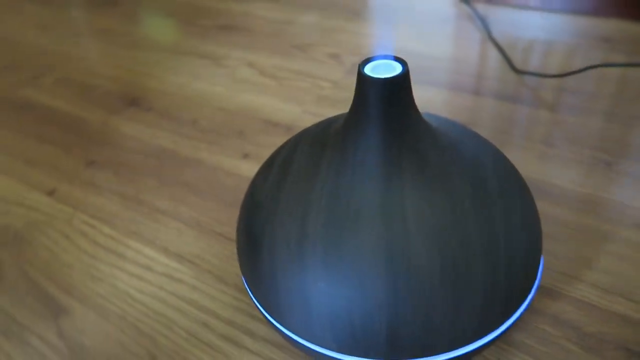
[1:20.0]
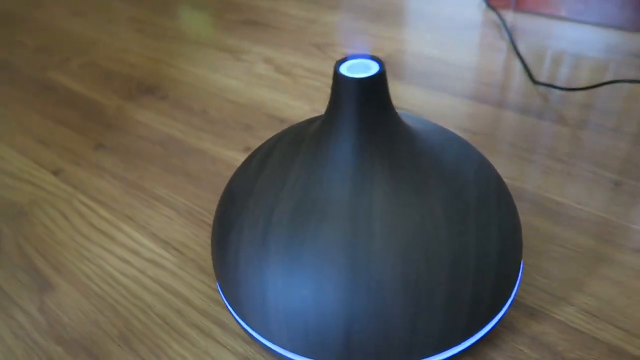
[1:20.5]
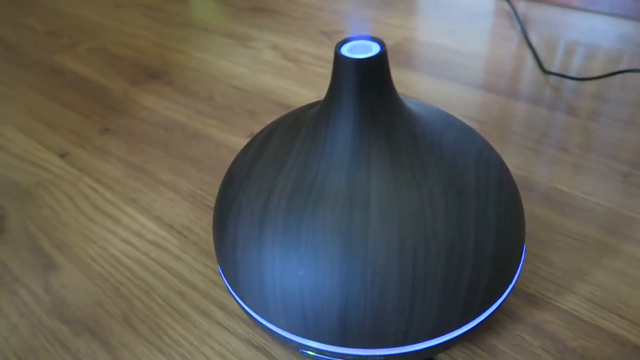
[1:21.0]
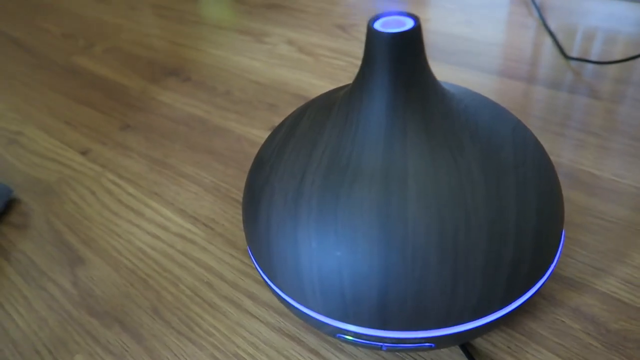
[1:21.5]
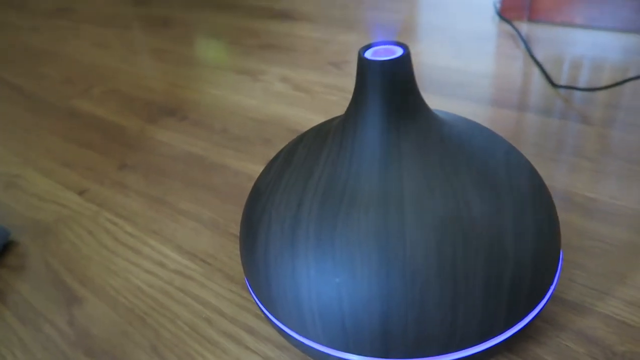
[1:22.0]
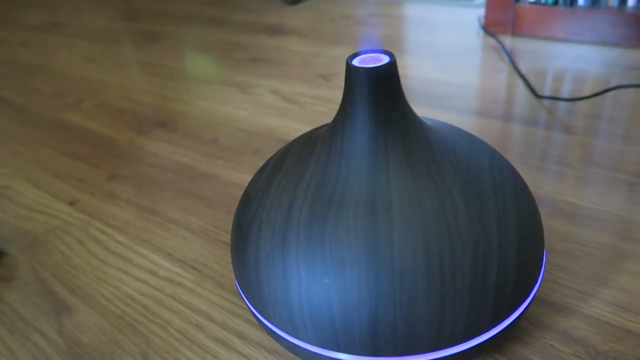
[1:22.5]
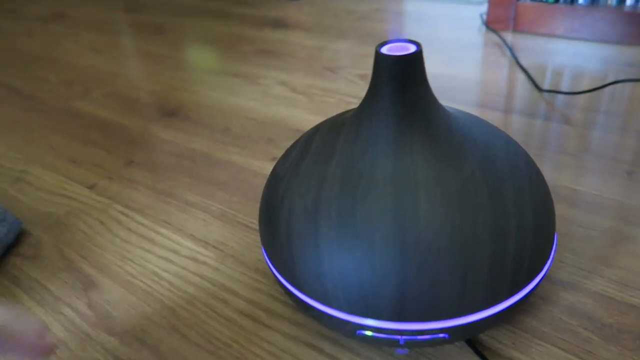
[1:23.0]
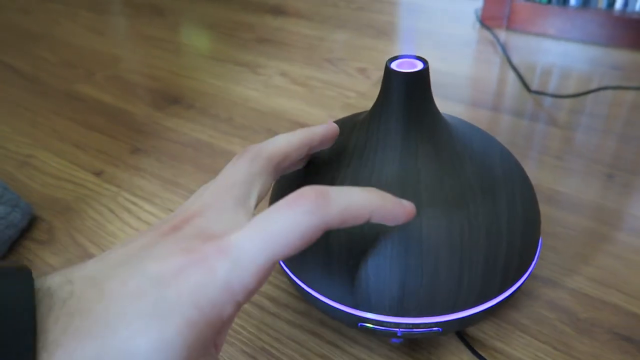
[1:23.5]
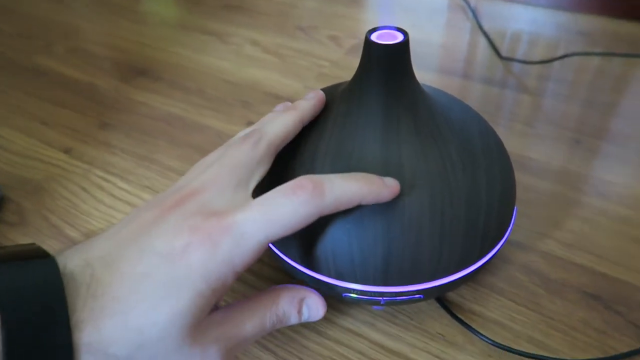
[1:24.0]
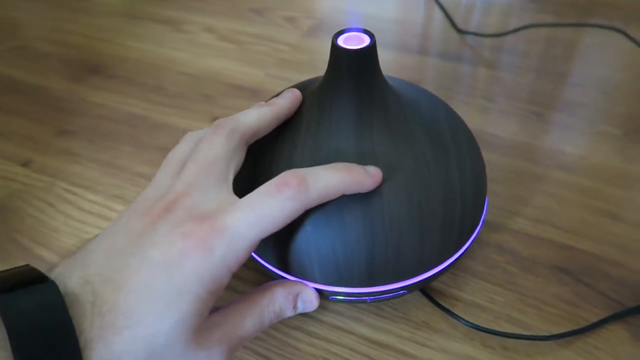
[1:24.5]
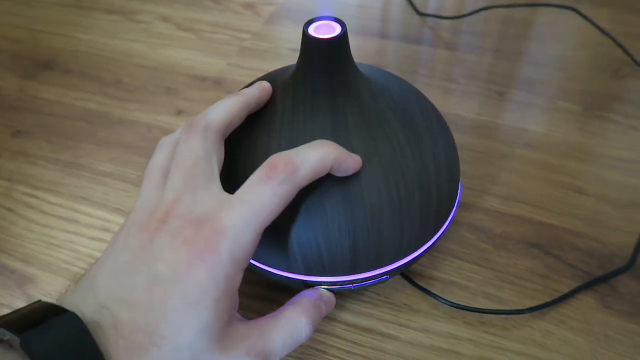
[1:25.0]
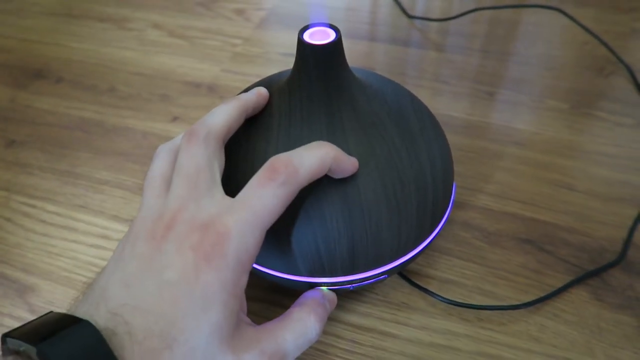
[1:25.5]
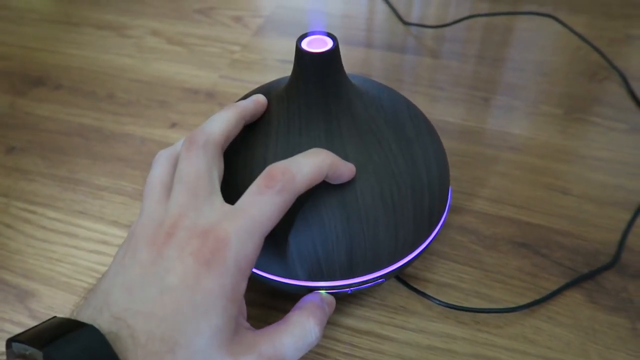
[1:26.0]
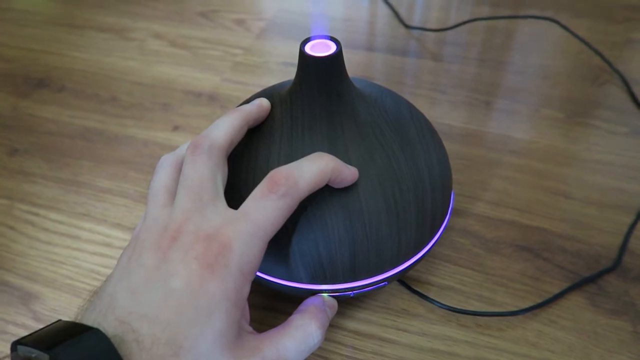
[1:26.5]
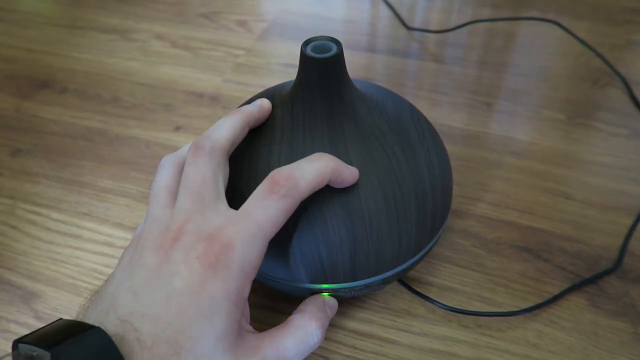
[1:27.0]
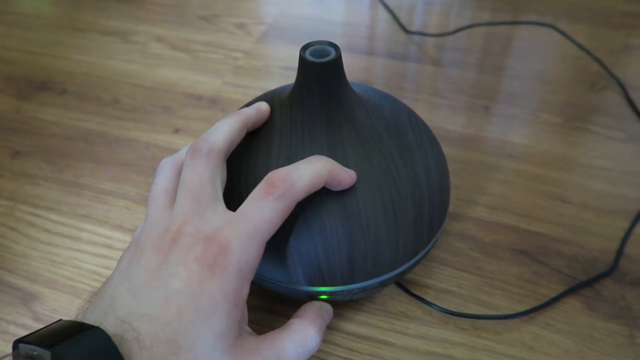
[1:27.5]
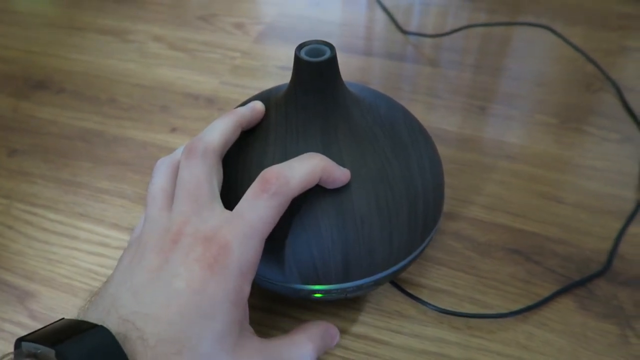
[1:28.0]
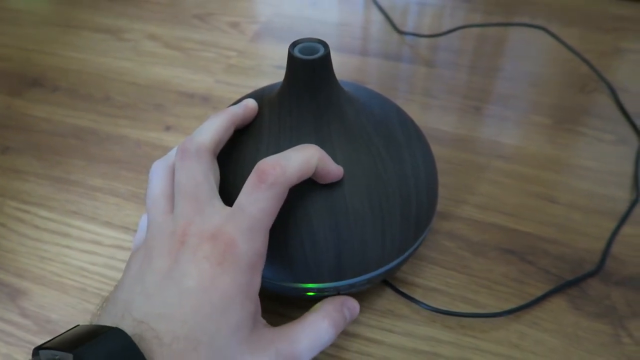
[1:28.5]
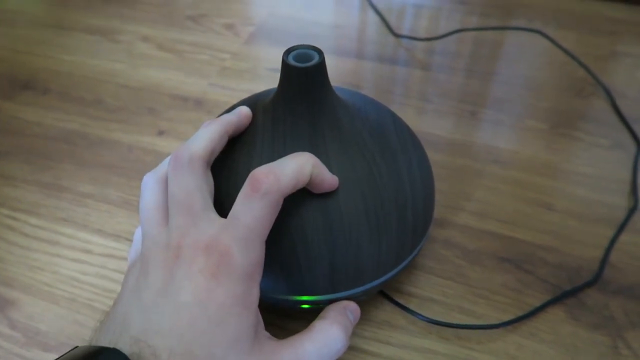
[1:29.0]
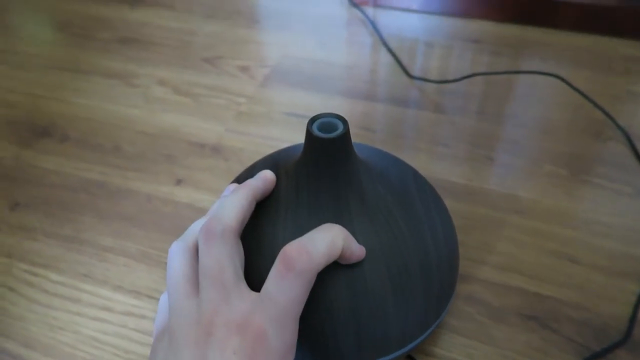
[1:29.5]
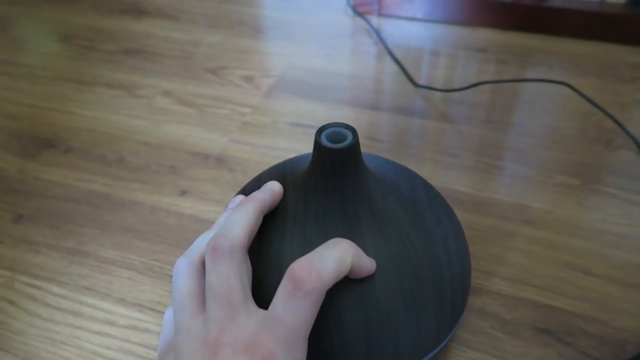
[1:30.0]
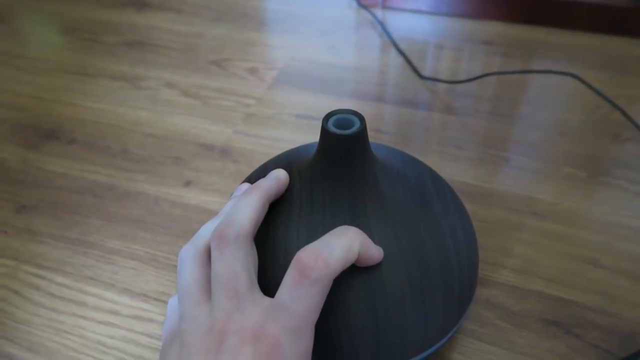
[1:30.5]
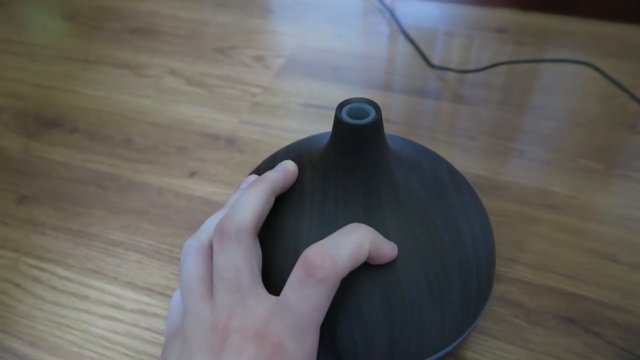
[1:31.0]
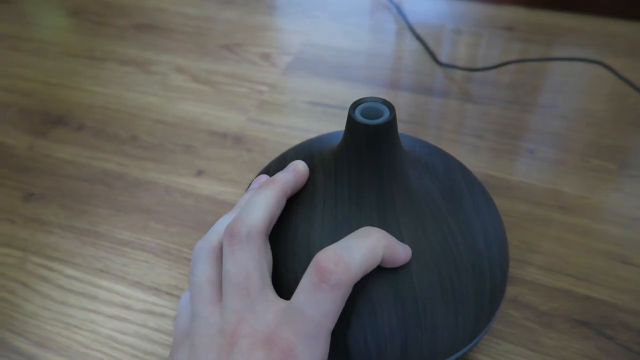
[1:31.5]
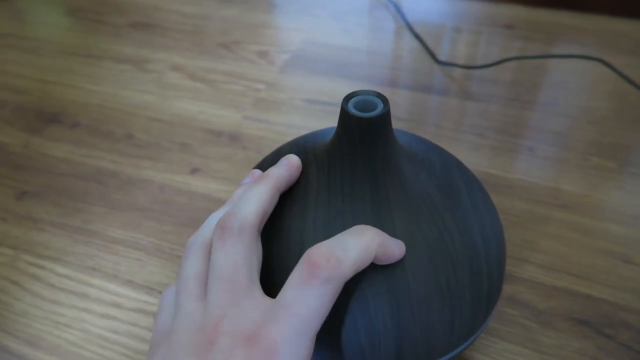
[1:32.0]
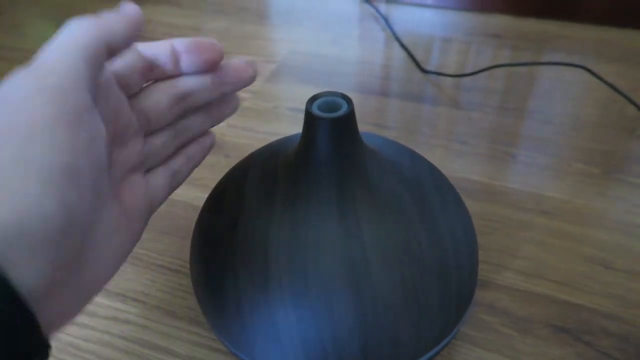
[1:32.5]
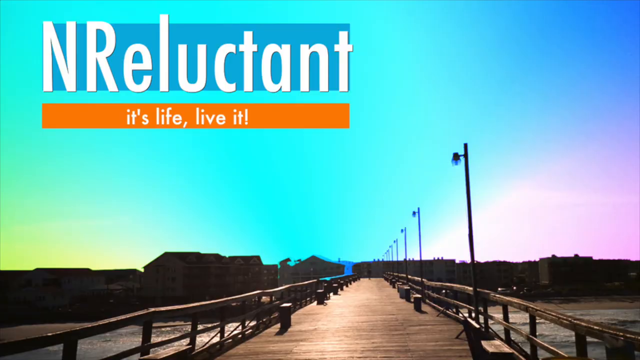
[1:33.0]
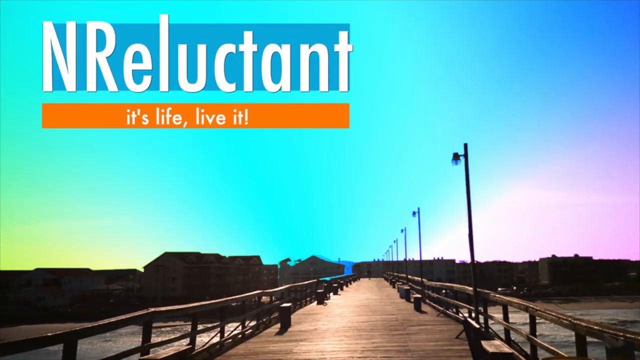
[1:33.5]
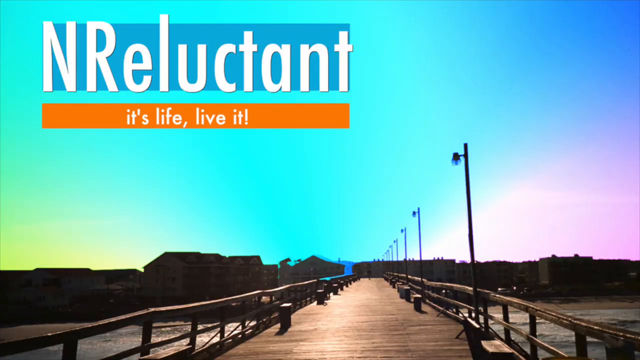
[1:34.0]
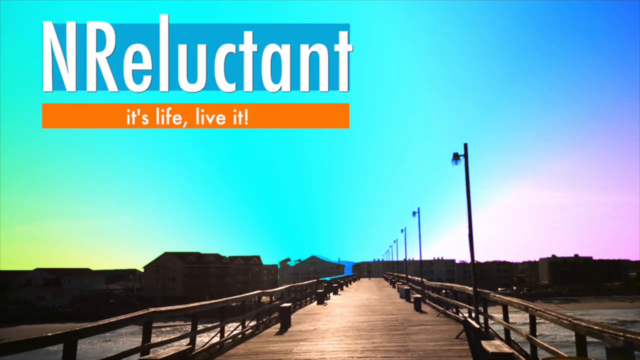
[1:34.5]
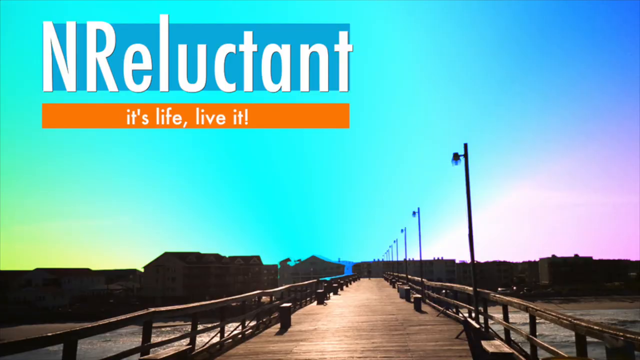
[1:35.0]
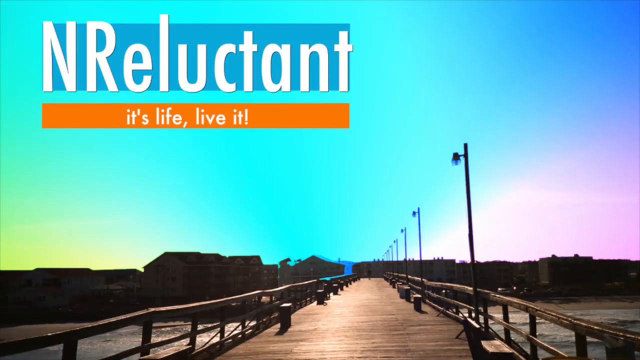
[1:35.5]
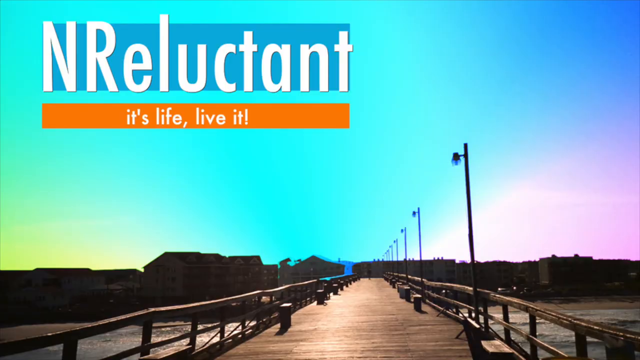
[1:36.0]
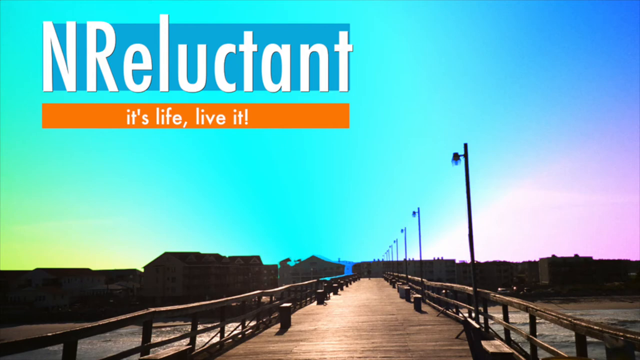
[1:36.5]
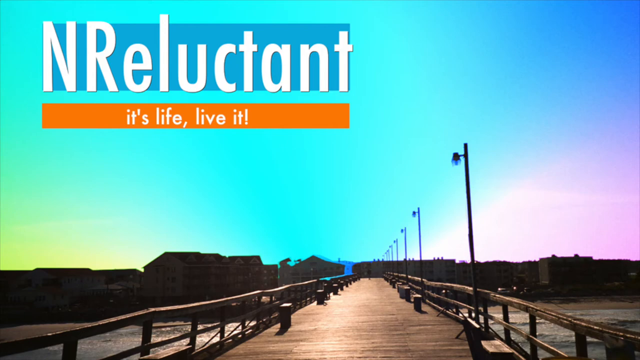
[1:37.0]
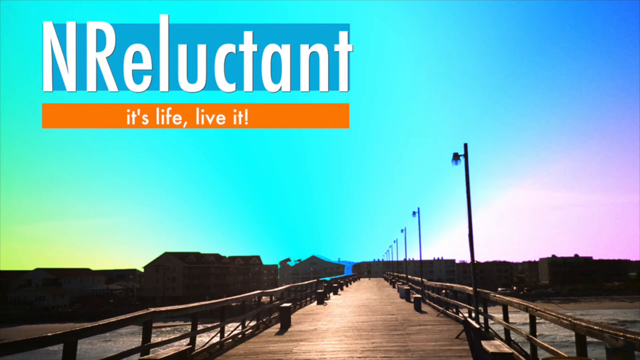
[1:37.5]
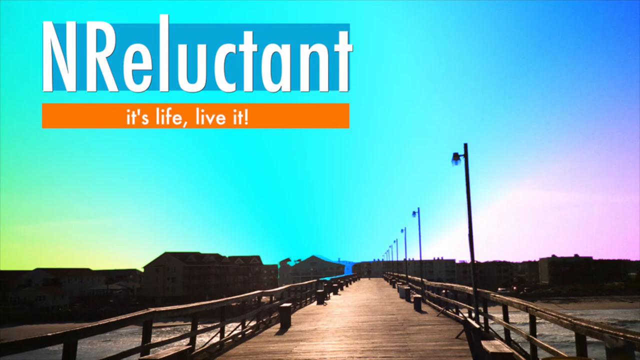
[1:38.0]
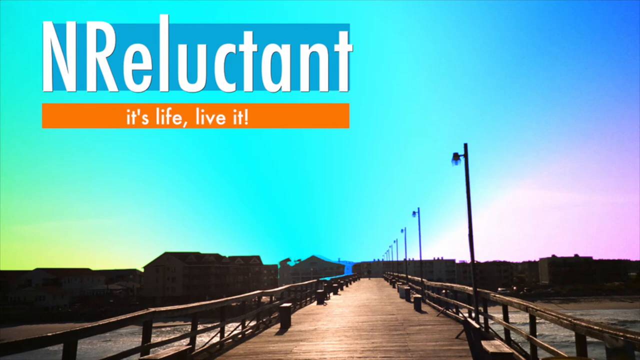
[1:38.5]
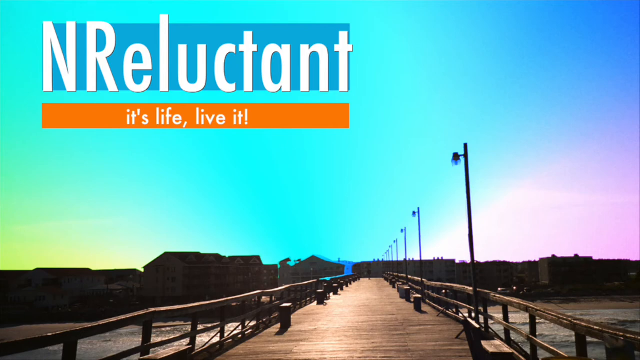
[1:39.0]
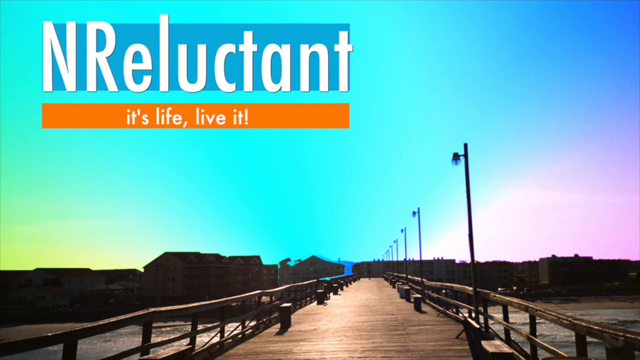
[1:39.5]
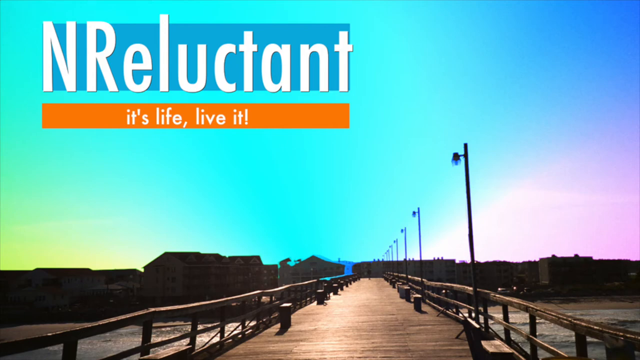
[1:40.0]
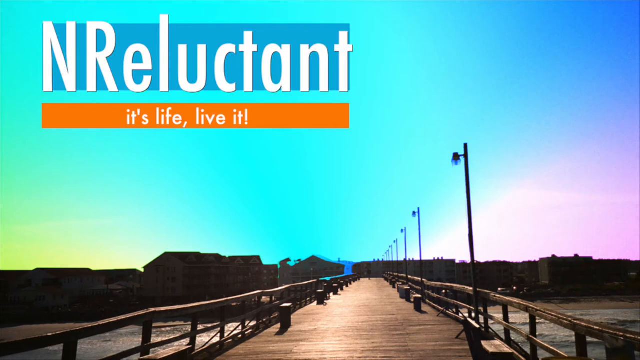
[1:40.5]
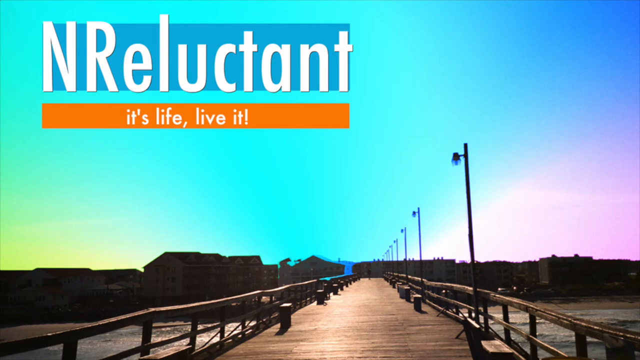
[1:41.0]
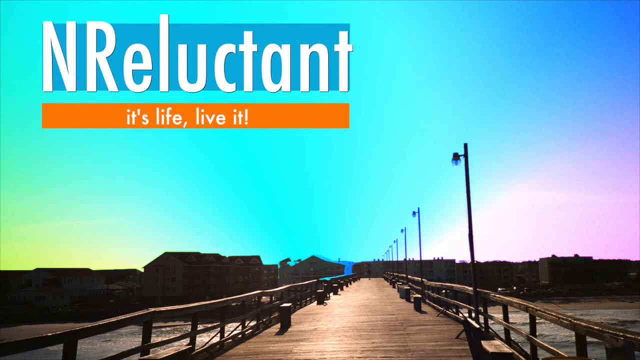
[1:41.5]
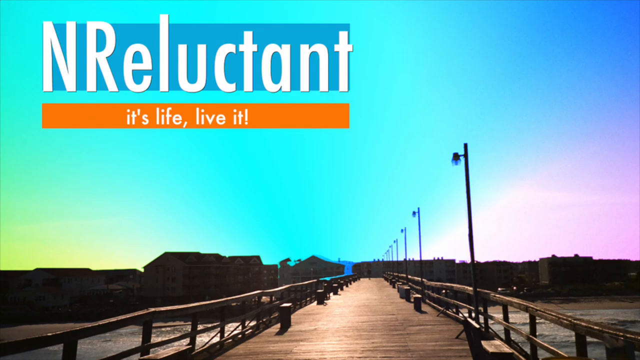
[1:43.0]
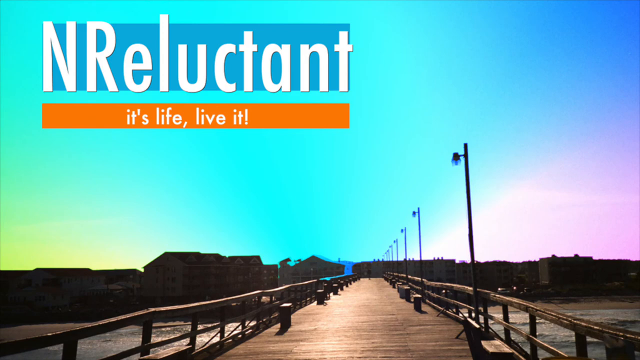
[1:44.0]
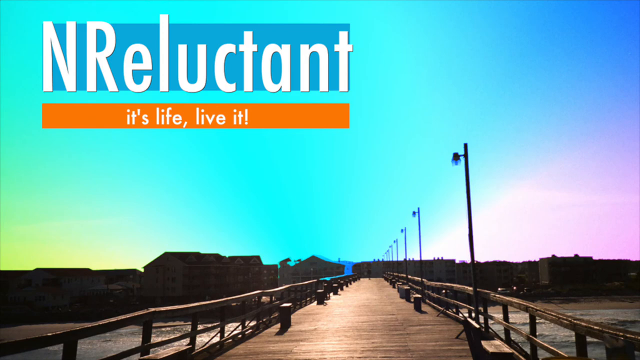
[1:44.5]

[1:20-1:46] The black essential oil diffuser is on polished hardwood floorboards, with a black electrical cable at the top right of the screen in the back. The diffuser is on, with a blue-green light coming out of it, and steam comes out of the top, also blue in colour. Someone's left hand grabs the diffuser, and the light changes to purple at the top and at the bottom; the vapour coming out of the top also turns purple. The cable at the top right of the screen is connected to the diffuser. The person keeps three fingers and their thumb on it, probably pressing some buttons near the bottom; there is a light, and the diffuser turns on. The hand then goes to the very back of the diffuser. The video changes to a different screen with the text "NReluctant, it's life, live it" in the top left corner. Below is a bridge with a sort of multicoloured sky in the background. There is nobody on the bridge, just some lights on the right of it and railings on either side.